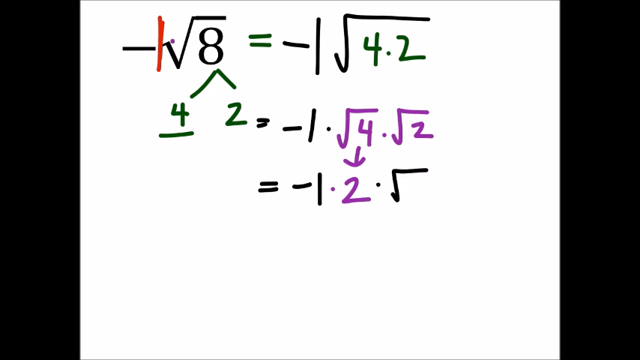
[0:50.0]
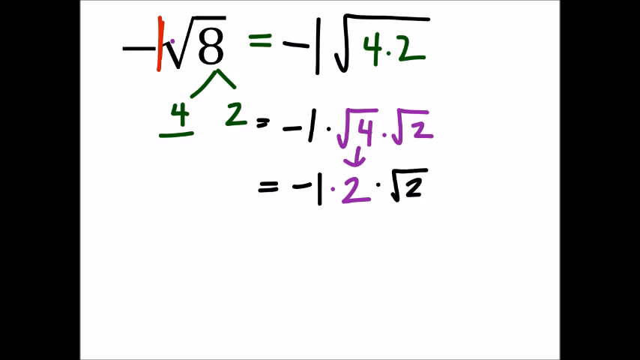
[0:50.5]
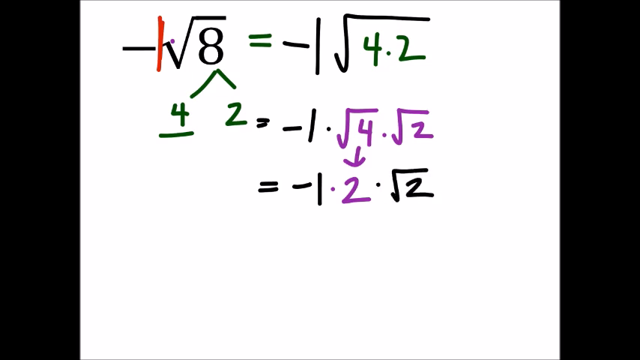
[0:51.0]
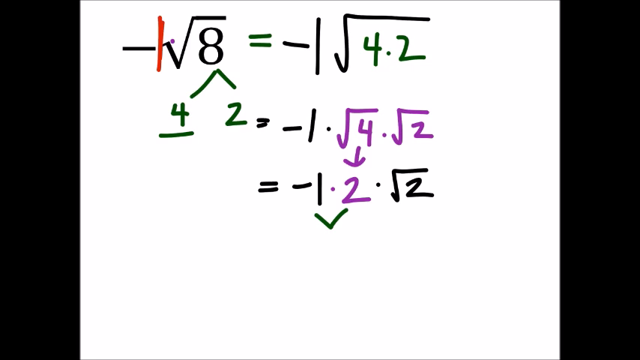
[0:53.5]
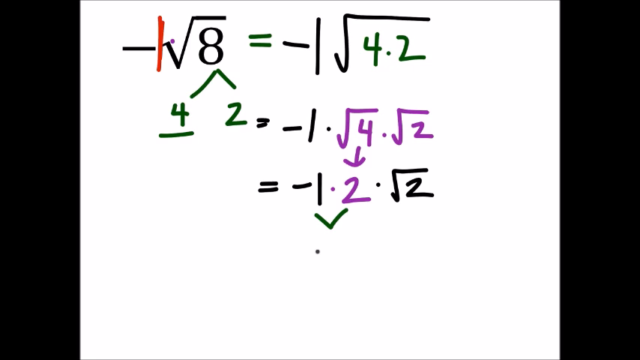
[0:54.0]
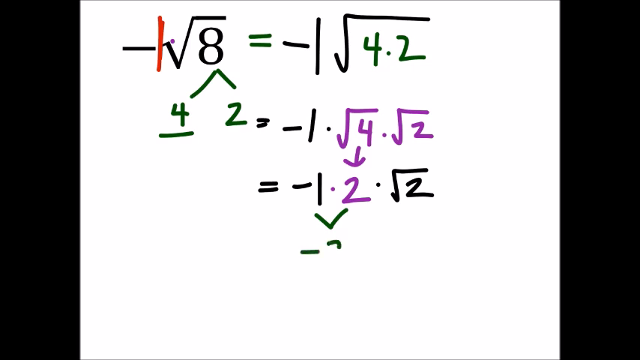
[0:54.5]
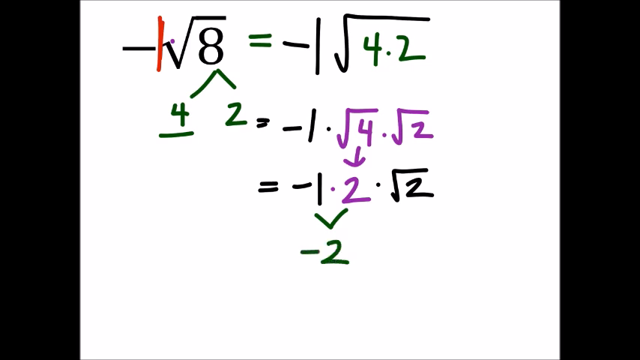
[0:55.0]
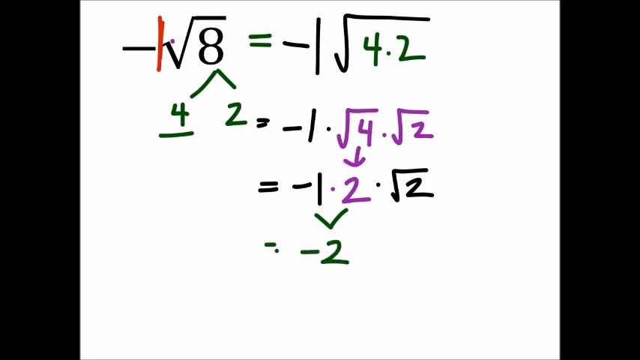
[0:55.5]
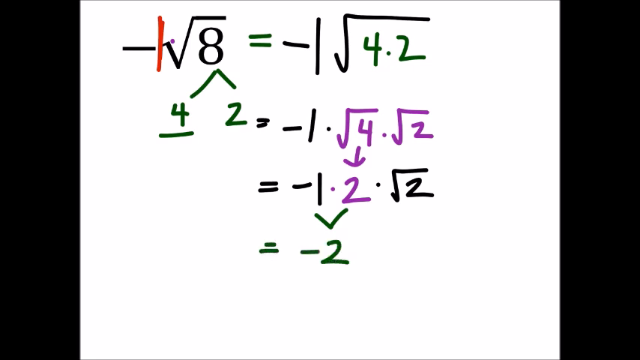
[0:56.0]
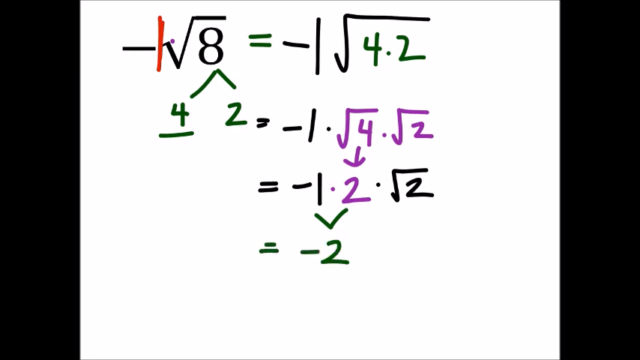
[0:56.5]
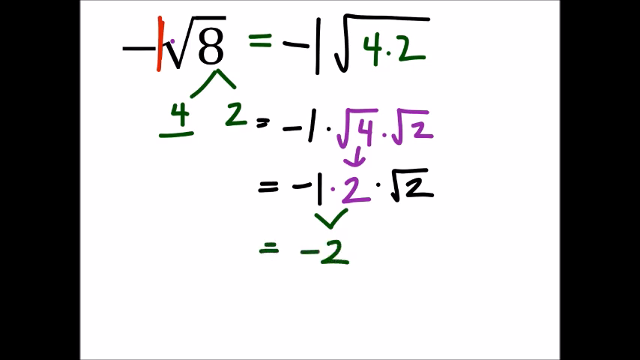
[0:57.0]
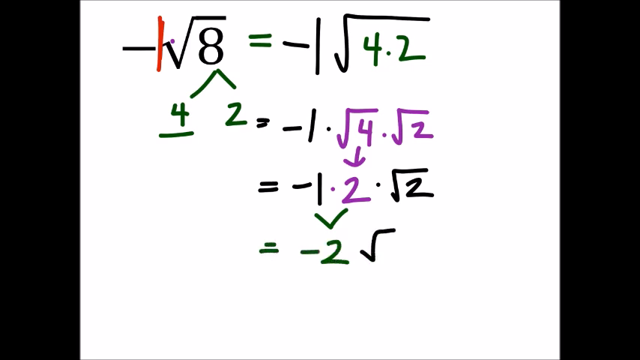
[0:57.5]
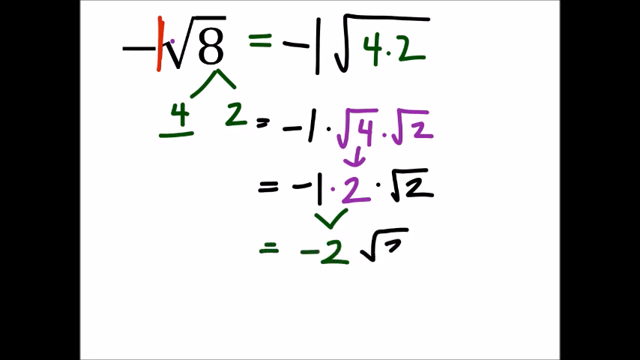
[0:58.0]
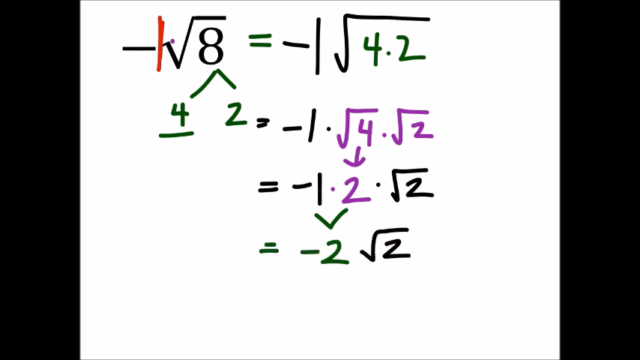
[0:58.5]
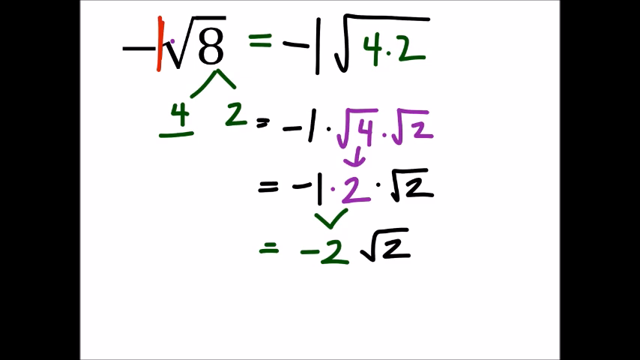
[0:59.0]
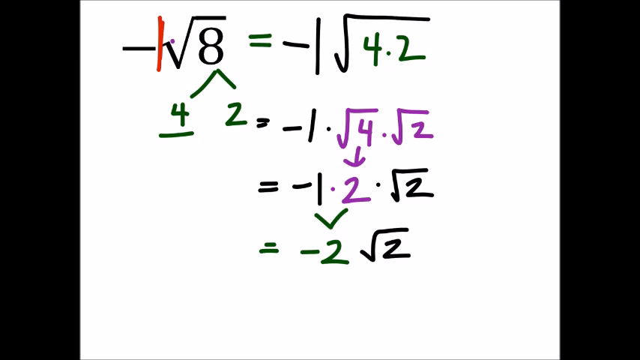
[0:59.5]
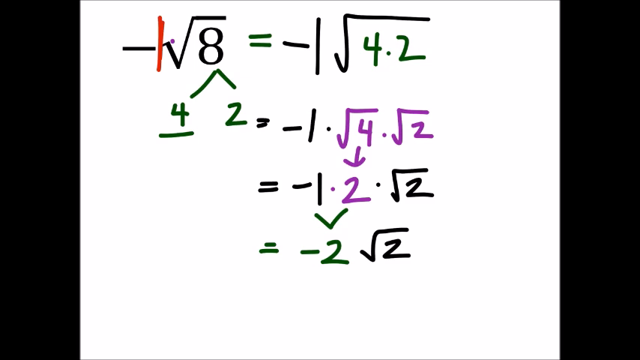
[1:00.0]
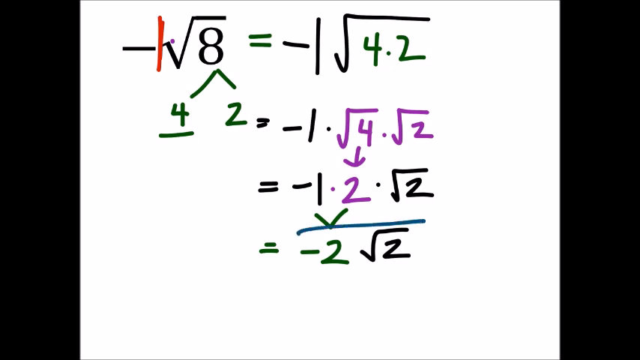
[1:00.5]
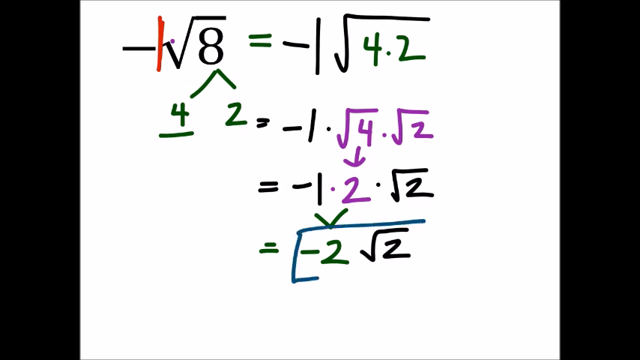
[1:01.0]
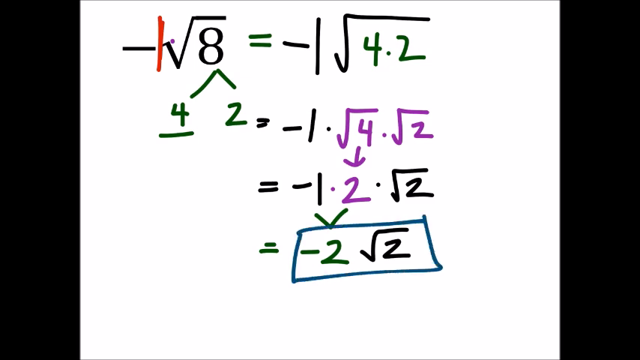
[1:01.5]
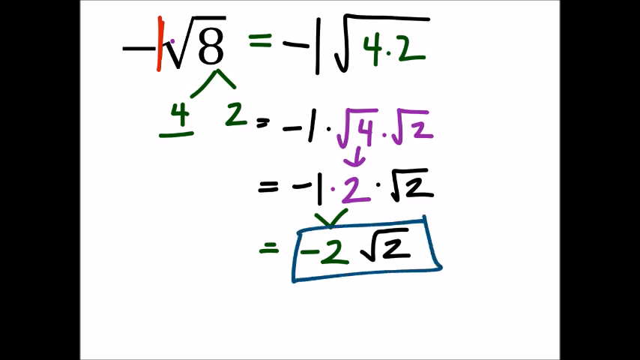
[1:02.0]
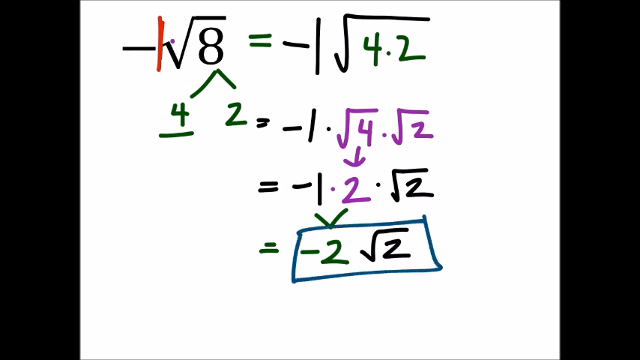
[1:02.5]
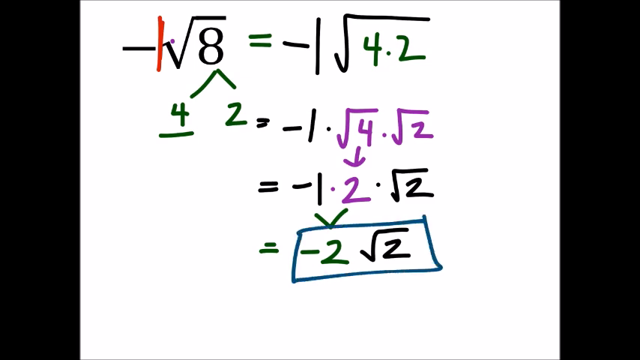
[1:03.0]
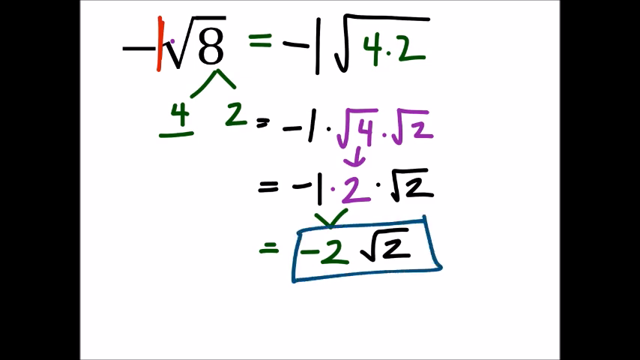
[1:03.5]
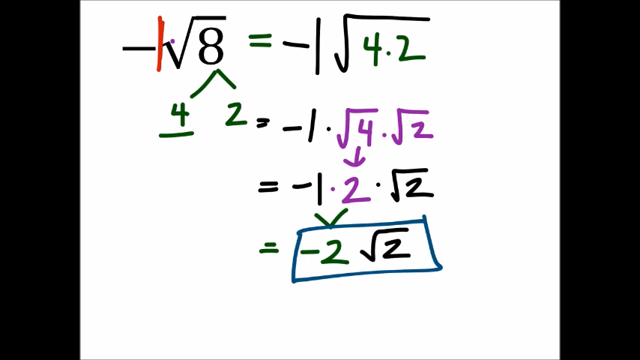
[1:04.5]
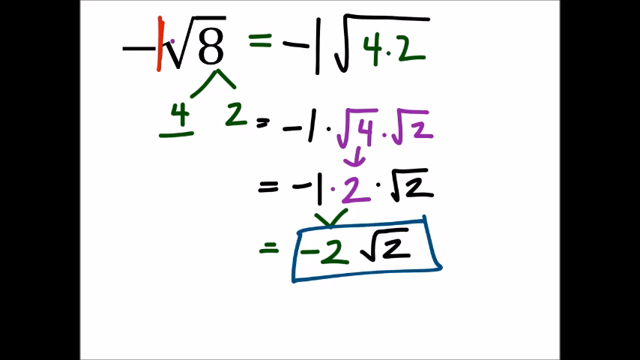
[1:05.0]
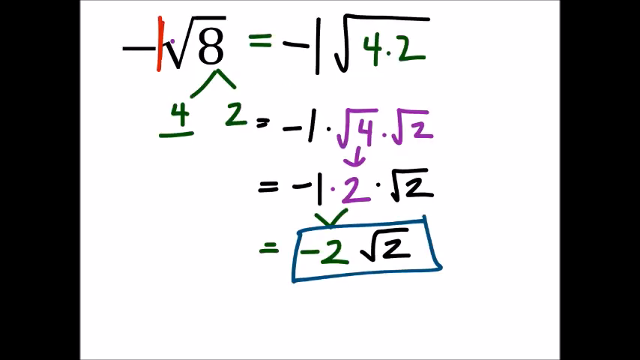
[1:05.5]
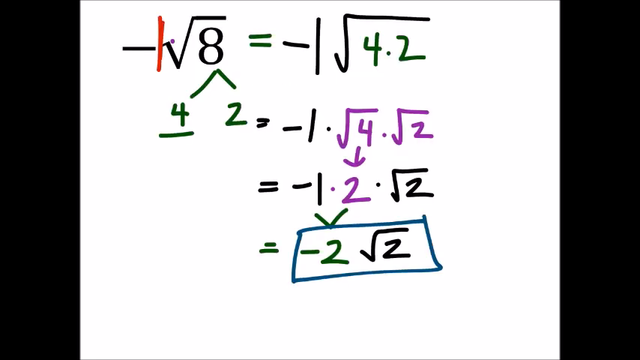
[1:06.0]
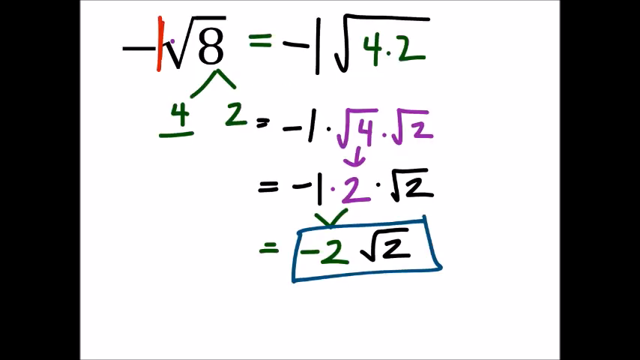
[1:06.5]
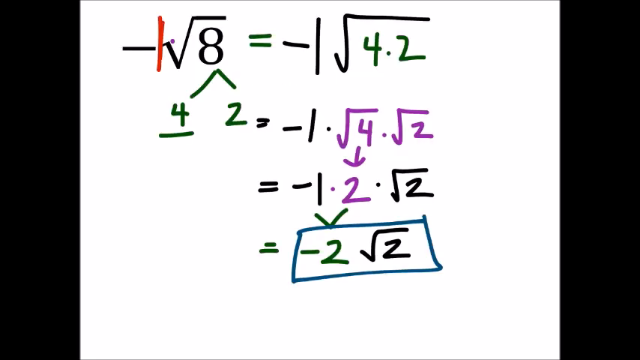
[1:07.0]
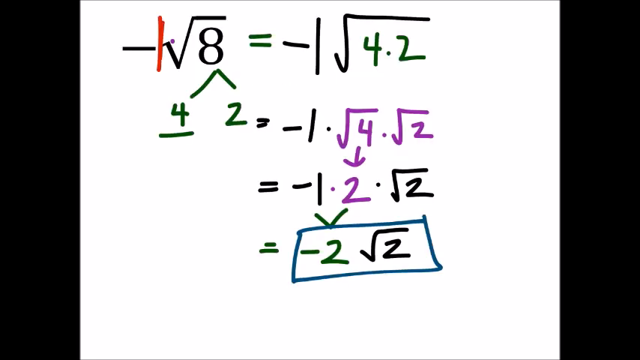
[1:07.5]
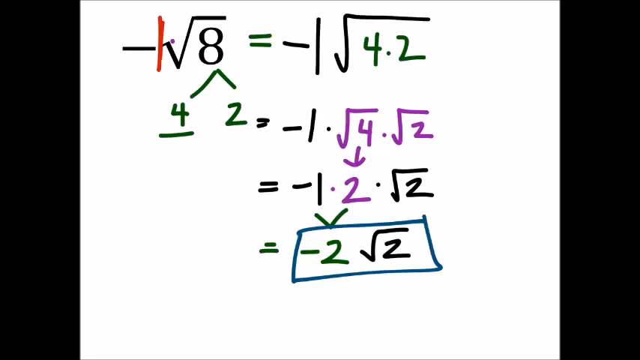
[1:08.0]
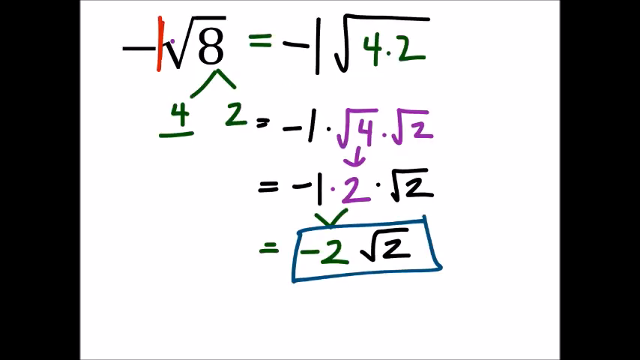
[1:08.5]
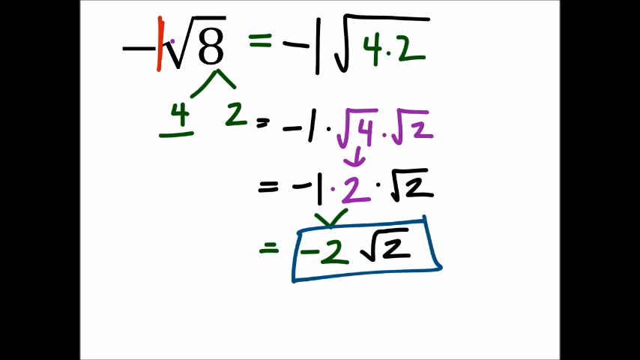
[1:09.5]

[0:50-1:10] The math problem looks hectic. It shows the square root of 8 in a negative form equal to negative 1 square root of 4.2. There is a red line between the negative sign and the square root sign. The equals sign is green, and the 4.2 is green as well. Underneath the 8 are two arrows: the left arrow has the number 4 and the right arrow has the number 2. The number 4 is underlined. Next to it is an equals sign followed by negative 1, a dot, square root of 4, a dot, square root of 2; the negative 1 is in black and the square root of 4 and square root of 2 are in purple. Below that is another equals sign with negative 1, a dot, the number 2, a dot, and square root of 2; the negative 1 is in black, the 2 is in purple, and the square root of 2 is in black. A V appears underneath the 2 and the 1. Another equals sign is added, with negative 2 and the square root of 2 written under the V. A square is then drawn around the negative 2 and square root of 2.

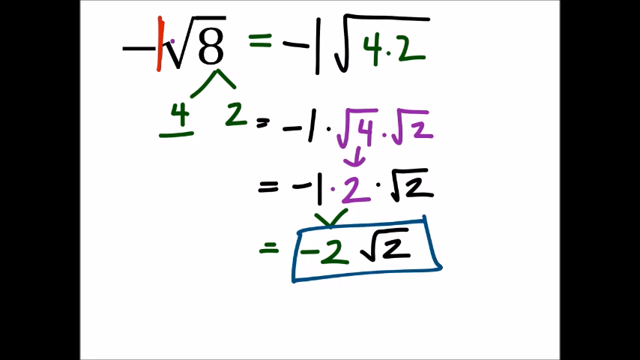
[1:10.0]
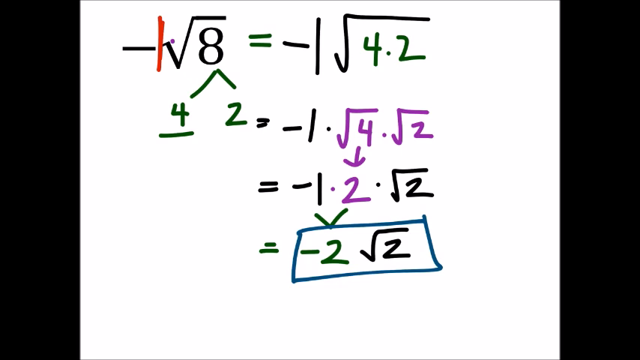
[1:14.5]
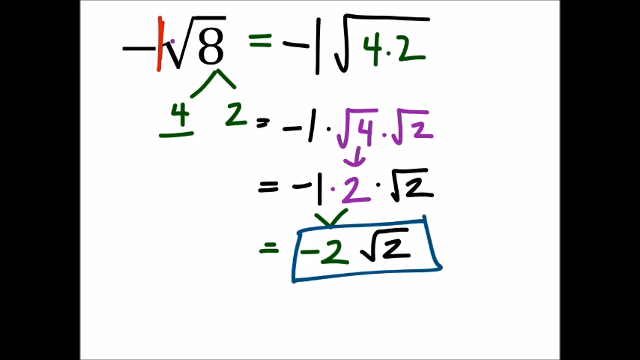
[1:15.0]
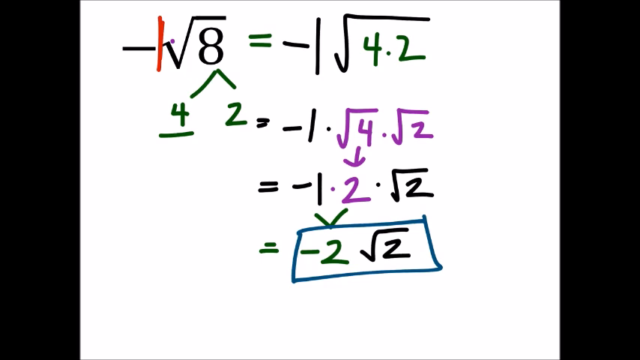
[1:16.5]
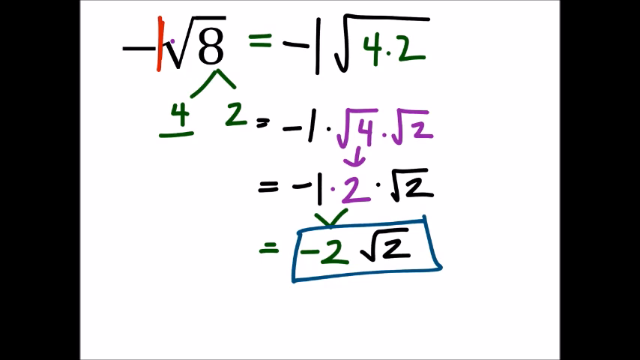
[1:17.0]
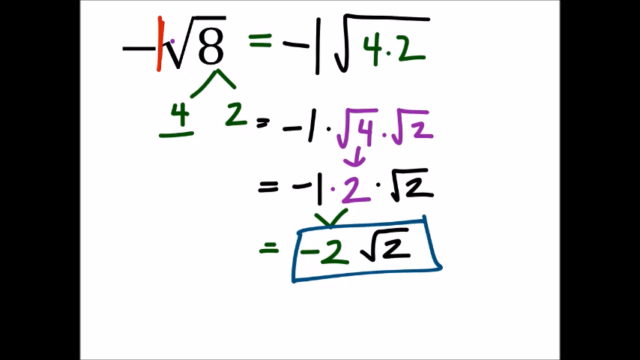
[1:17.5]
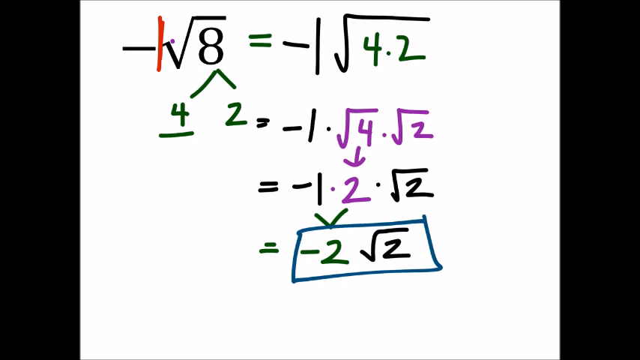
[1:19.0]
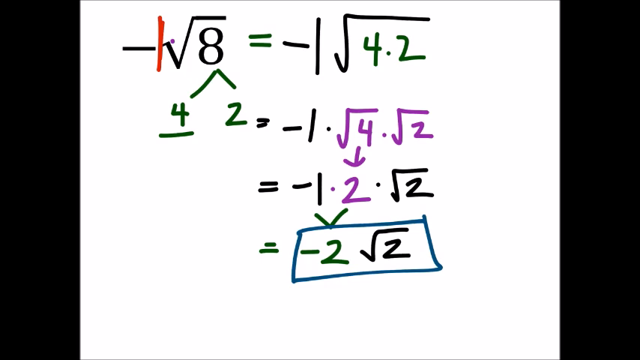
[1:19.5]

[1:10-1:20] The maths problem looks complicated. It reads negative square root of 8 equals negative 1 square root of 4.2. There is a red line between the square root sign and the negative sign. The equals sign is green, the negative 1 is black, and the 4.2 is green. Underneath the 8 are two lines, with the number 4 on the left line and the number 2 on the right line; the 4 is underlined, in green. Next to the 2 is an equals sign, then negative 1 dot square root of 4 dot square root of 2; both square roots are in purple and the negative 1 is in black. An arrow pointing downwards is written underneath the 4. Then comes an equals sign and negative 1 dot 2 dot square root of 2, with the negative 1 in black, the 2 in purple and the square root of 2 in black. Two lines make a V, one pointing to the negative 1 and one to the purple 2. Underneath that is another equals sign with negative 2 and the square root of 2. A blue square is then drawn around the negative 2 square root of 2.